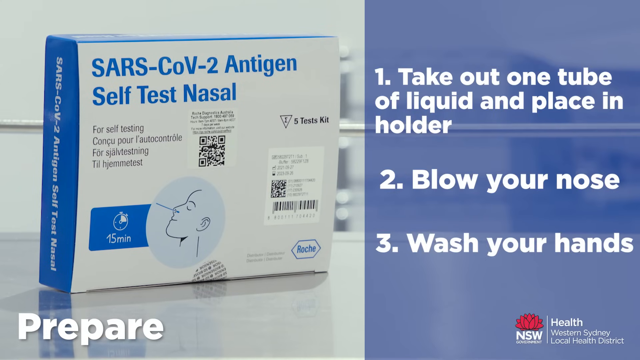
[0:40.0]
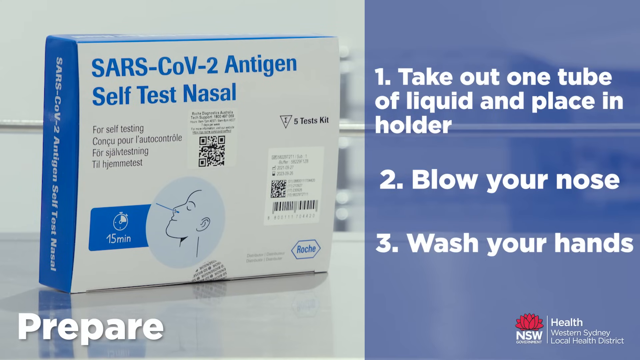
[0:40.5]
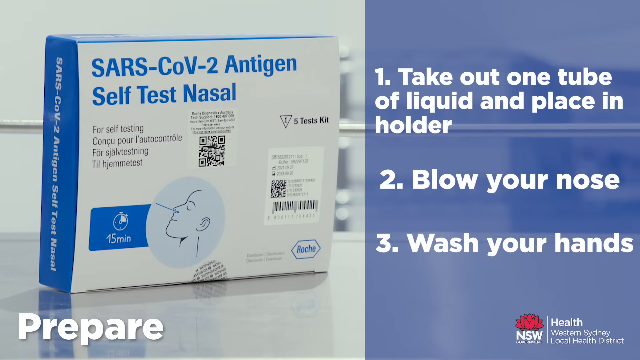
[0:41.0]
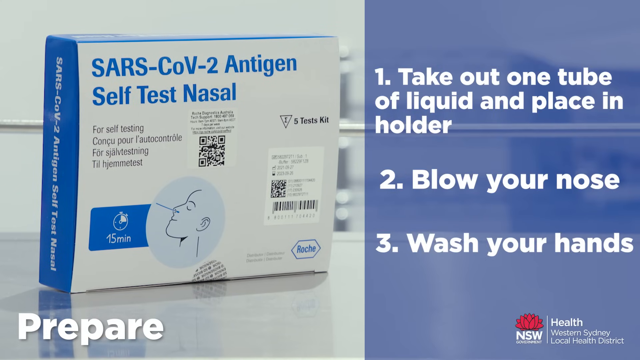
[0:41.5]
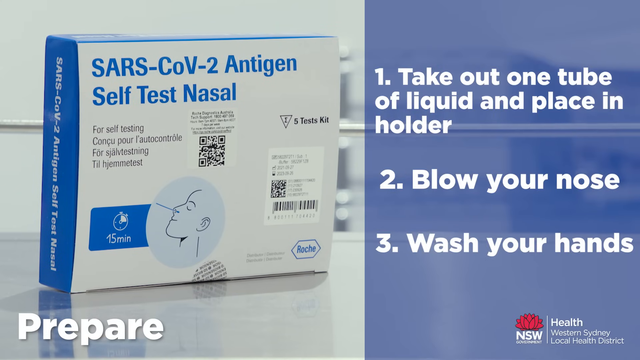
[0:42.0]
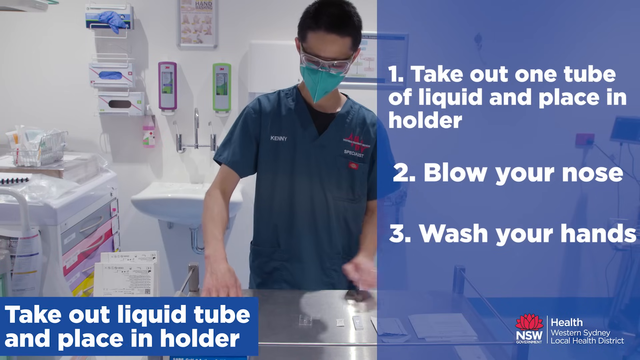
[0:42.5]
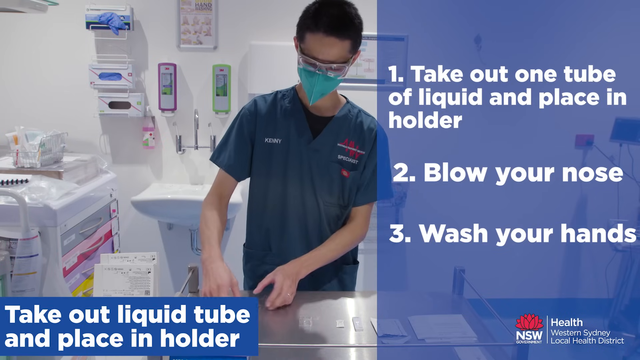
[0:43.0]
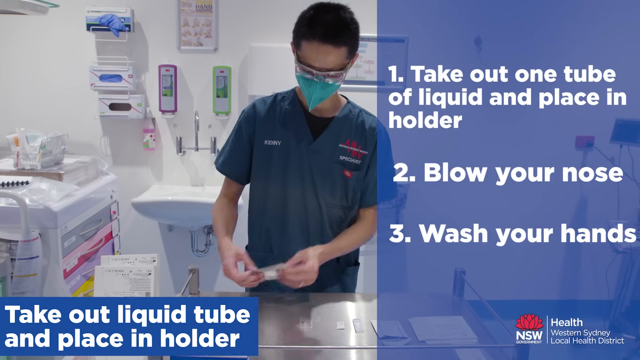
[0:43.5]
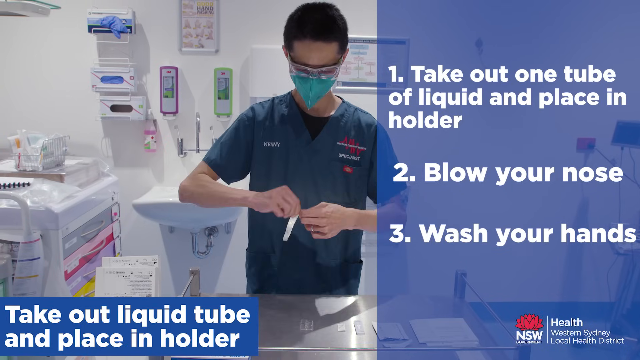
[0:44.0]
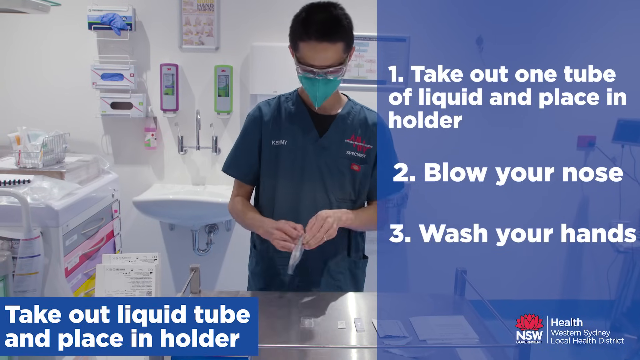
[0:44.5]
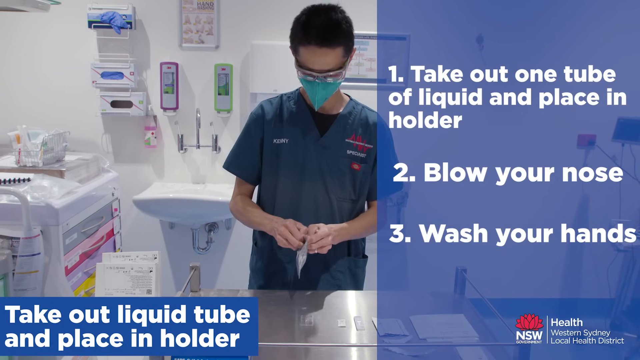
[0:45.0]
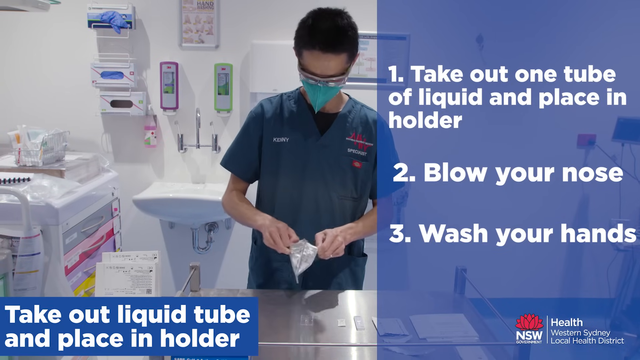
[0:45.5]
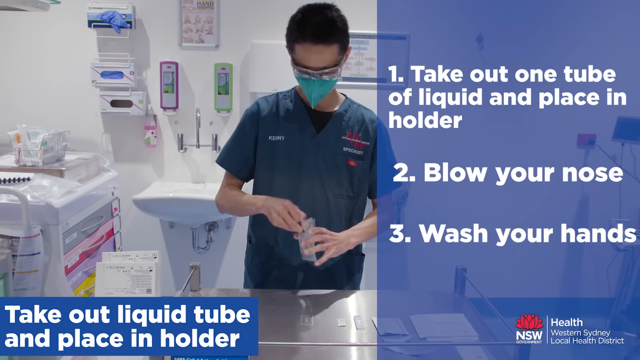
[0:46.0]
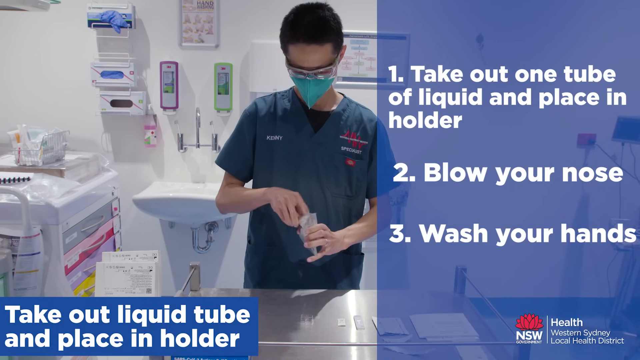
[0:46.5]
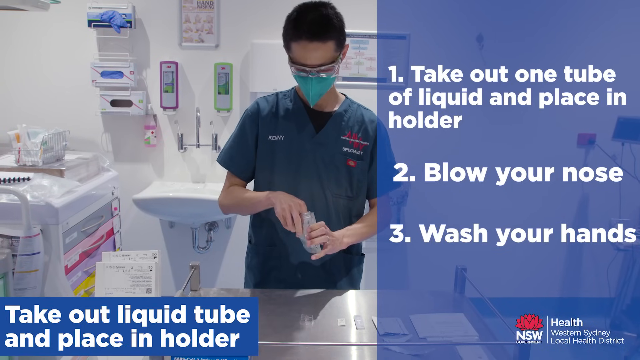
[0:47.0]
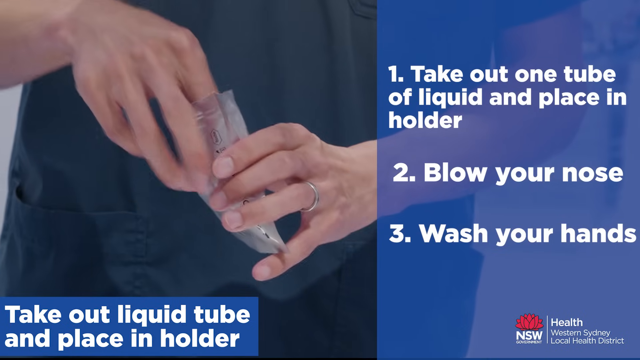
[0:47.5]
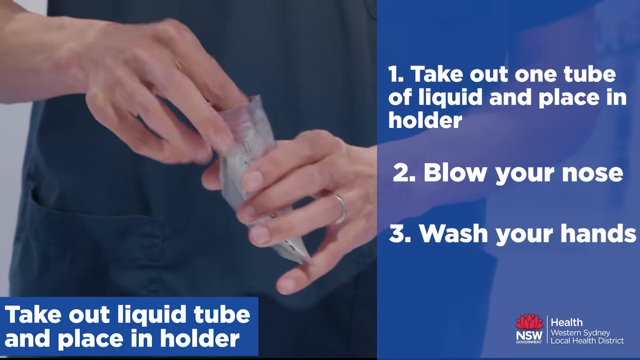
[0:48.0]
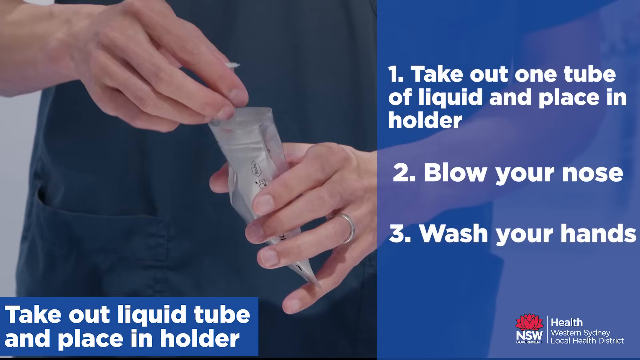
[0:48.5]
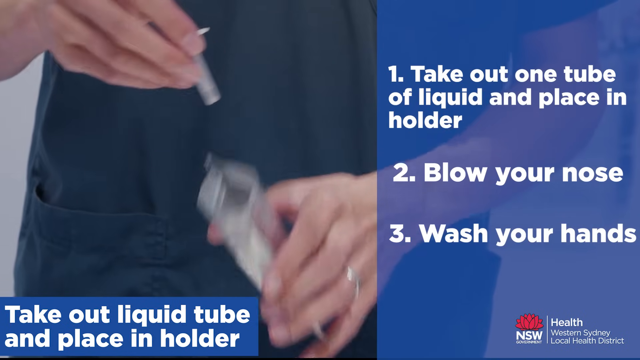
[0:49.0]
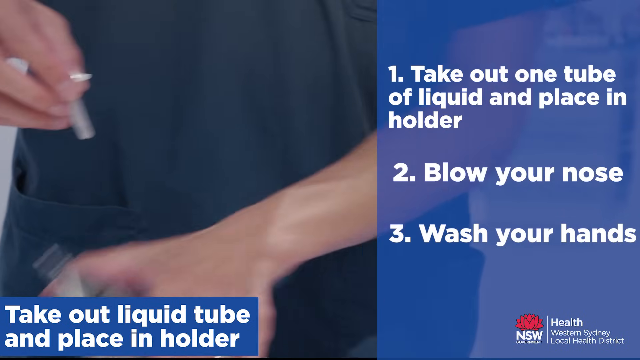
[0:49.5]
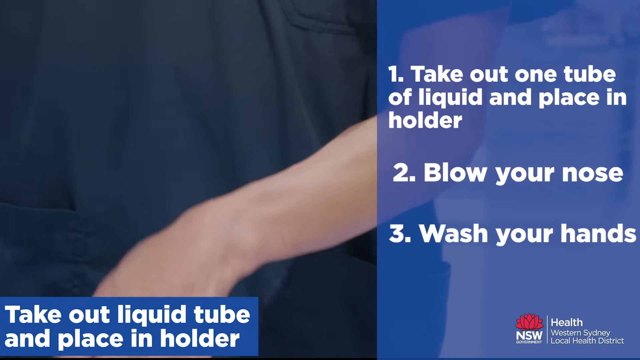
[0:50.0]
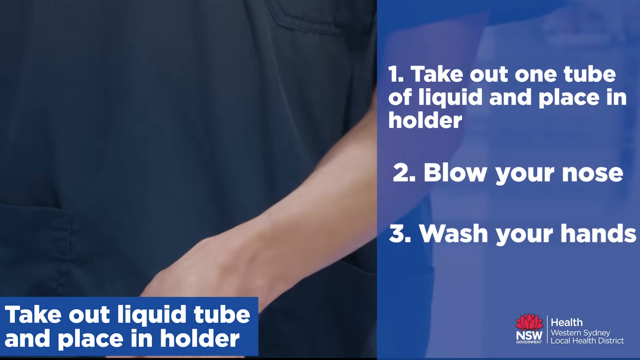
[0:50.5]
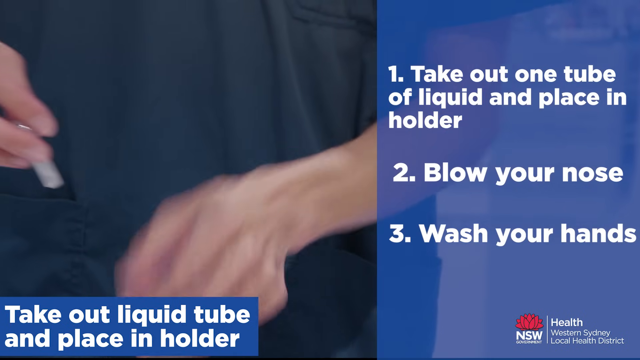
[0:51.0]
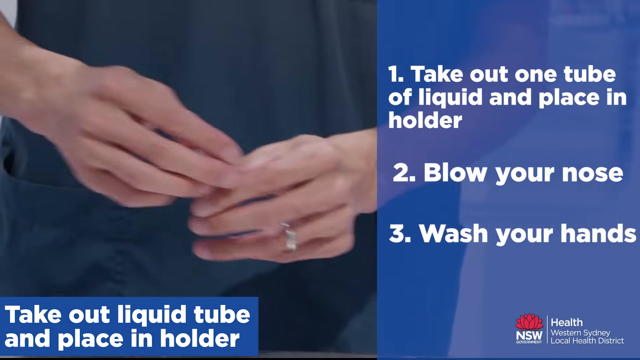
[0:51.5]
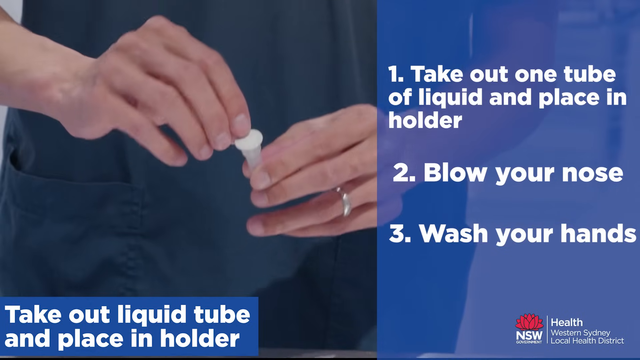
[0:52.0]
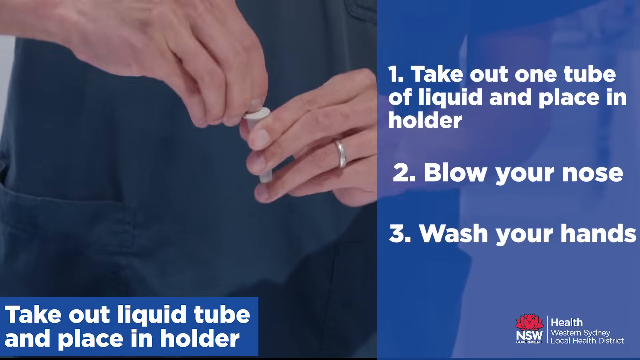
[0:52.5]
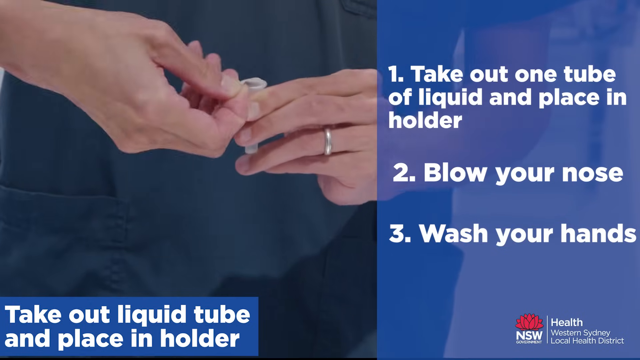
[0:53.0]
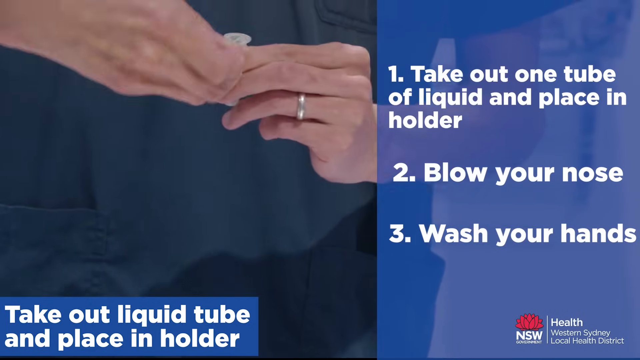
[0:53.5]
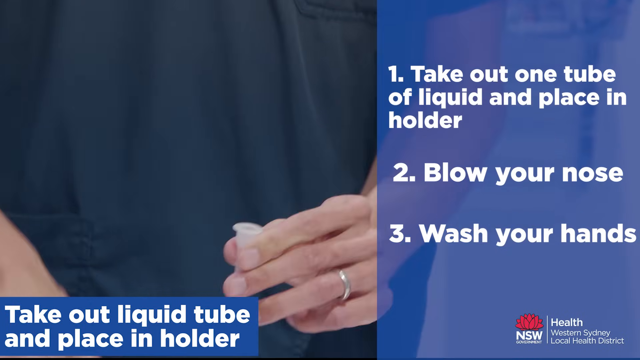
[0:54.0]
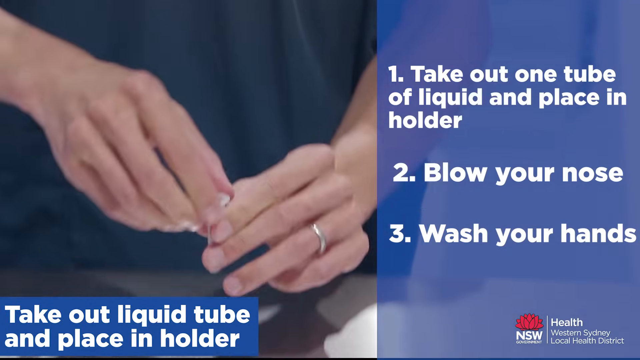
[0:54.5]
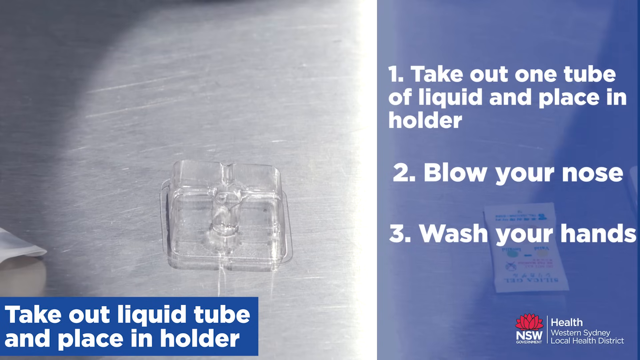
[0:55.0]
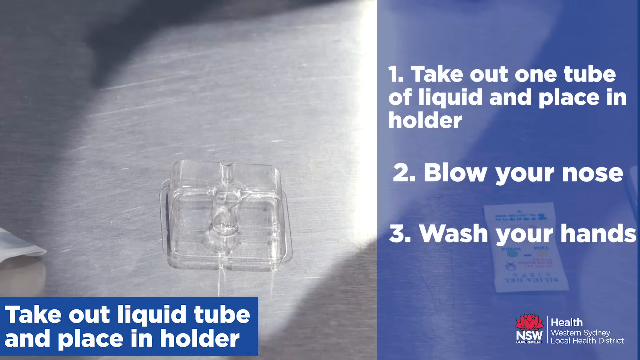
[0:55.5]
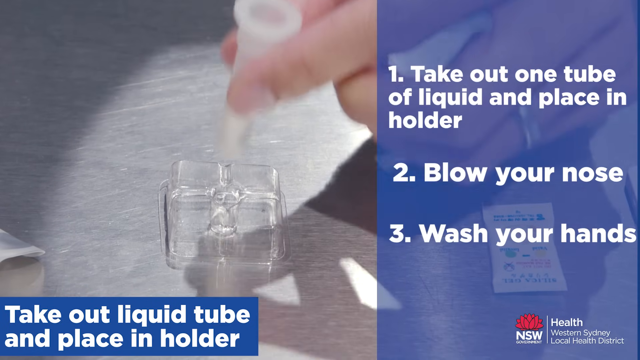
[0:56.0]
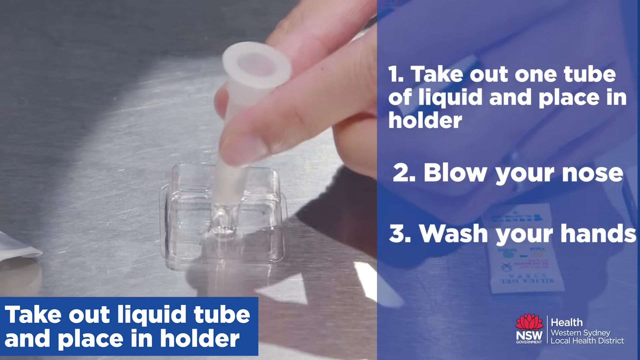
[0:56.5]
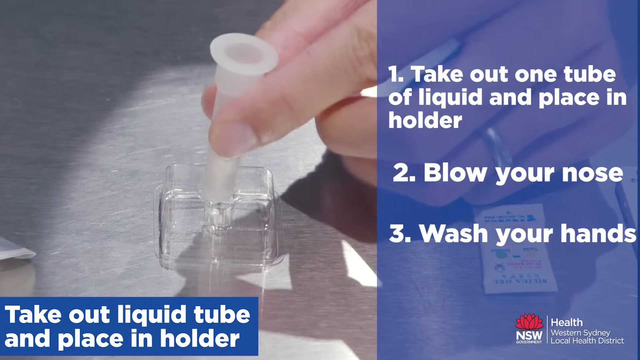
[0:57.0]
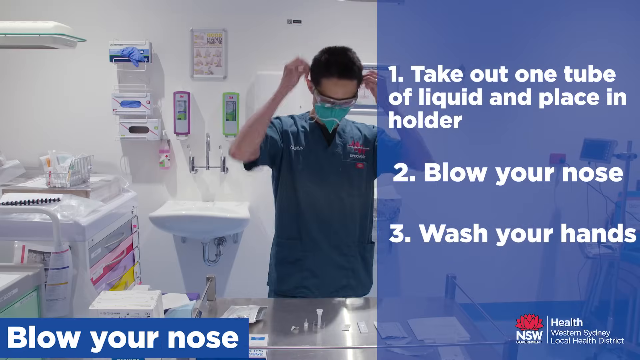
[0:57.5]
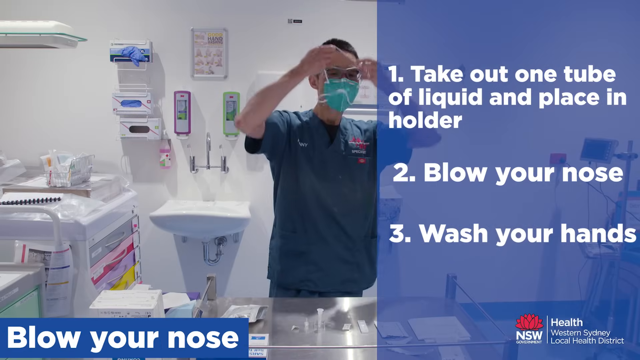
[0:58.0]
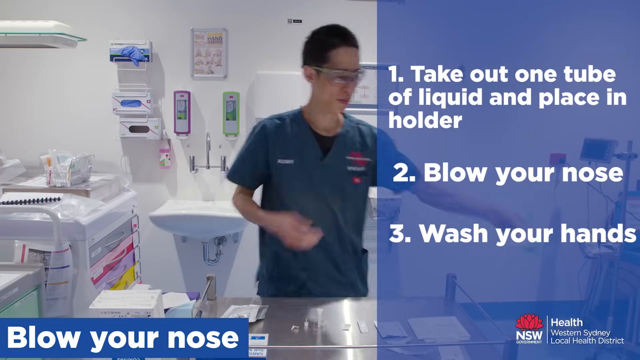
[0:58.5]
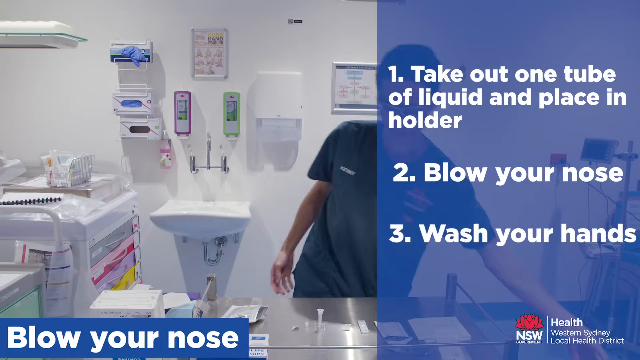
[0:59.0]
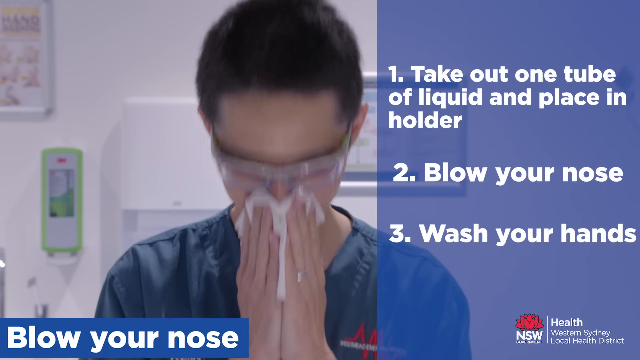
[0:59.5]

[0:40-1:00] A blue and white test kit is shown, then the view flashes over to a clinician taking the pieces out of their bags. Instructions appear on one half of the screen, reading "take out one tube of liquid and place in holder. Blow your nose and wash your hands." The man takes the tube out; he has a ring on his left hand. He peels off some kind of top, sticks the white tube in the clear stand, and blows his nose. Behind him in the medical room are a sink, about three boxes of blue latex gloves on the wall, some medical cart stands and some medical charts on the wall. He wears goggles and a blue face mask until he takes the mask off to blow his nose, and his scrubs are dark green.